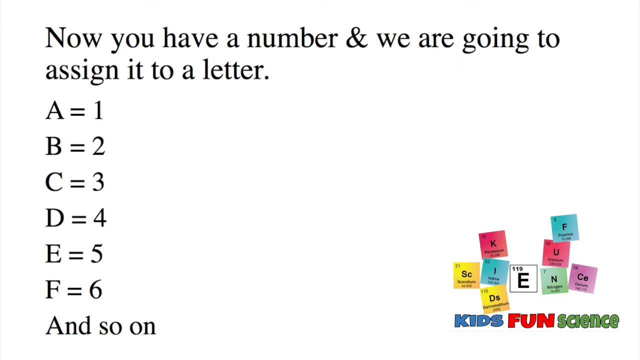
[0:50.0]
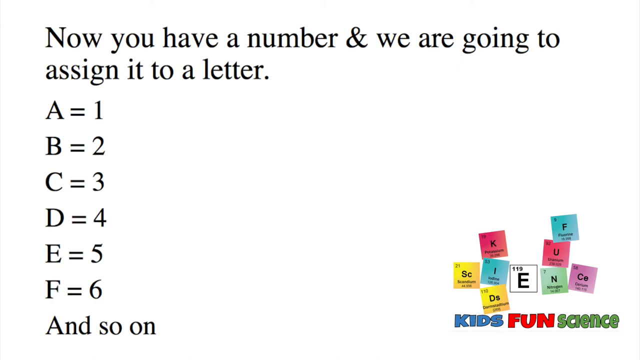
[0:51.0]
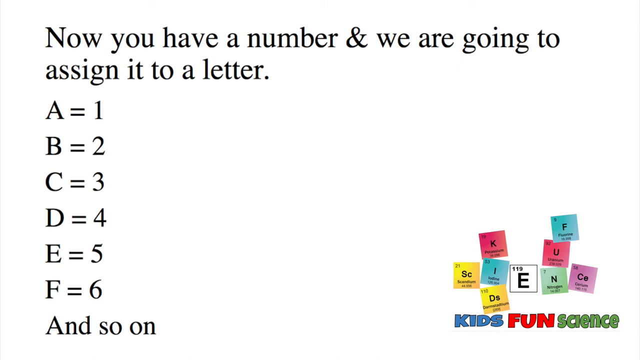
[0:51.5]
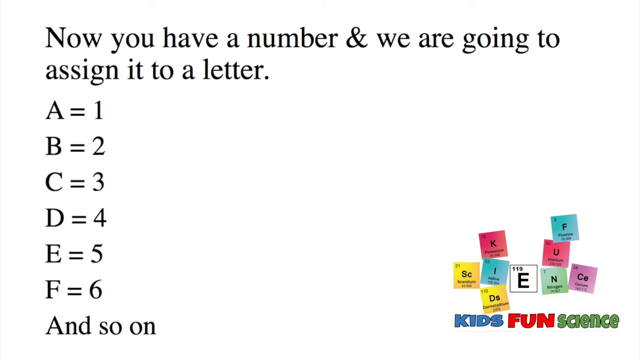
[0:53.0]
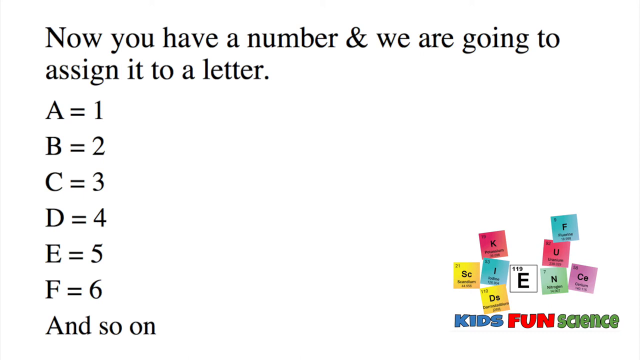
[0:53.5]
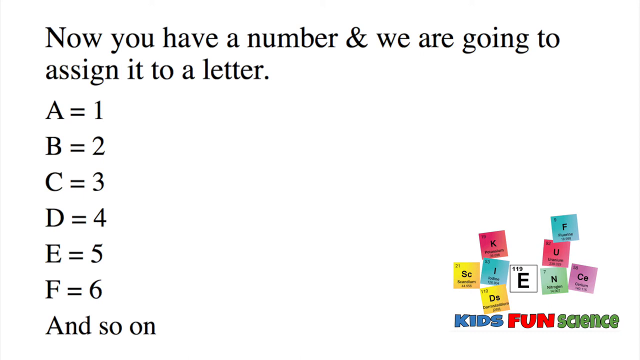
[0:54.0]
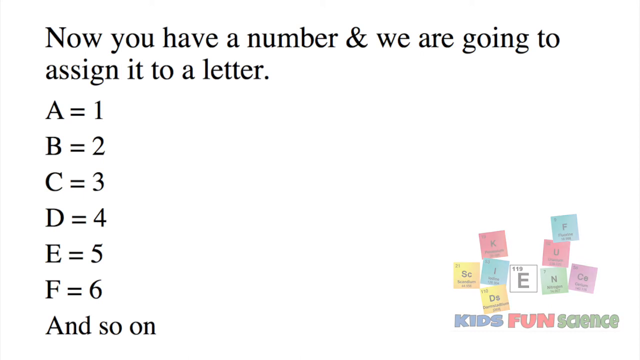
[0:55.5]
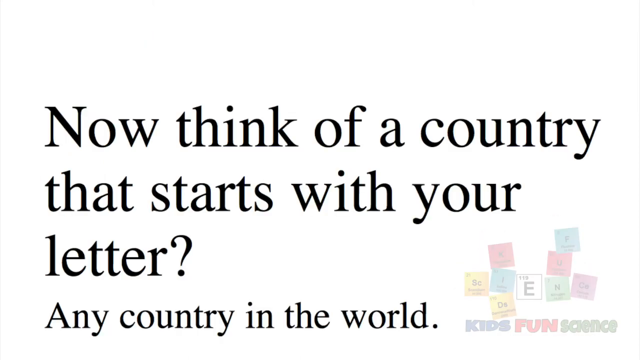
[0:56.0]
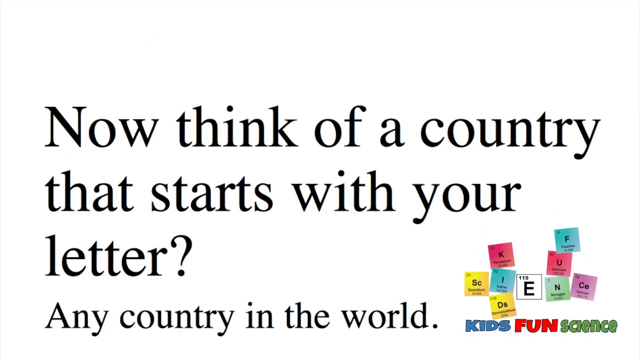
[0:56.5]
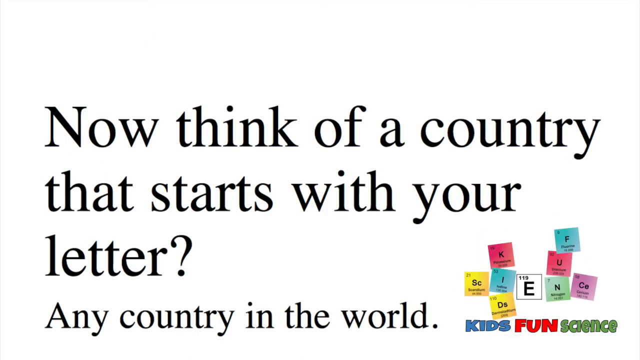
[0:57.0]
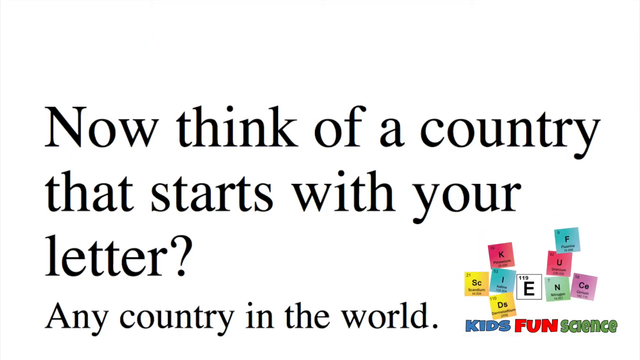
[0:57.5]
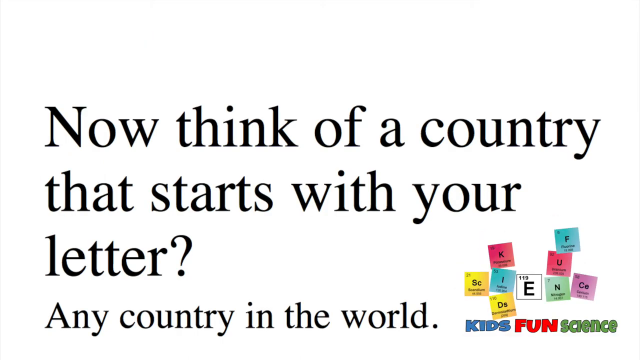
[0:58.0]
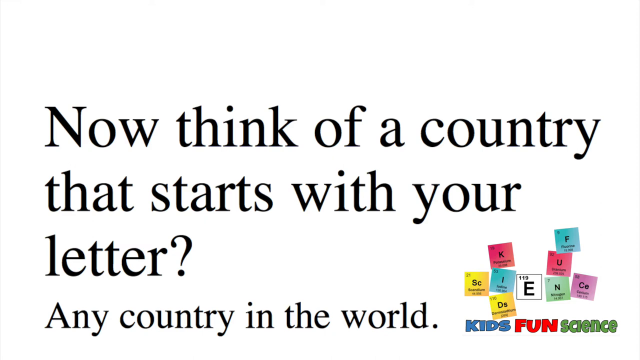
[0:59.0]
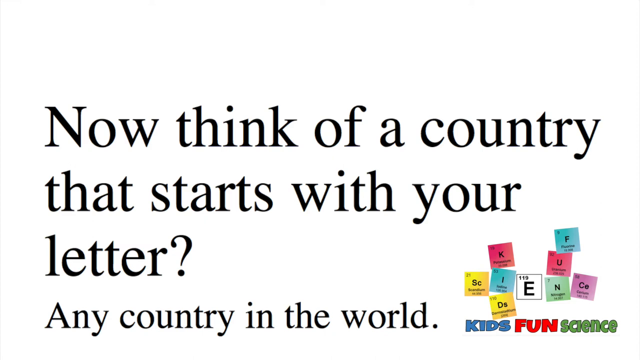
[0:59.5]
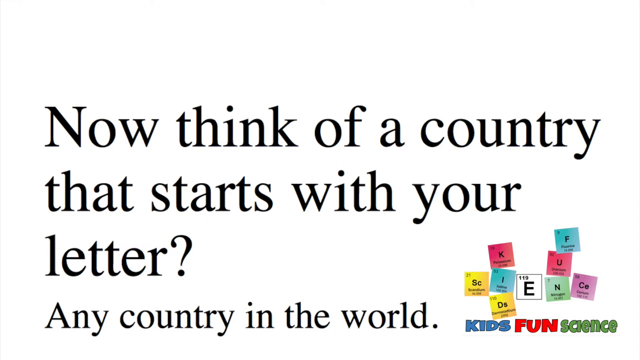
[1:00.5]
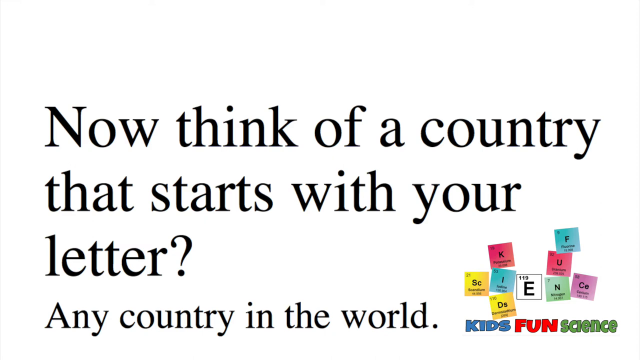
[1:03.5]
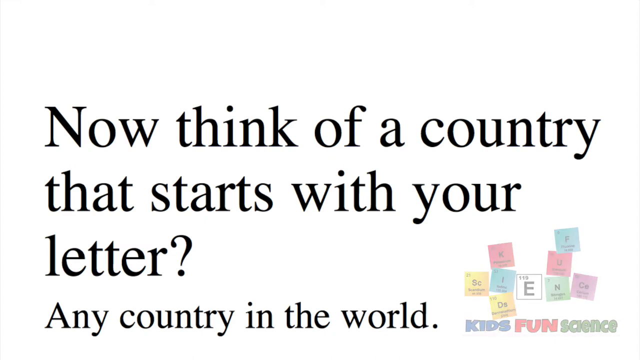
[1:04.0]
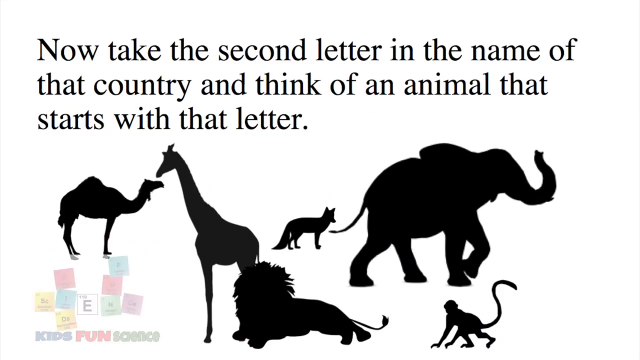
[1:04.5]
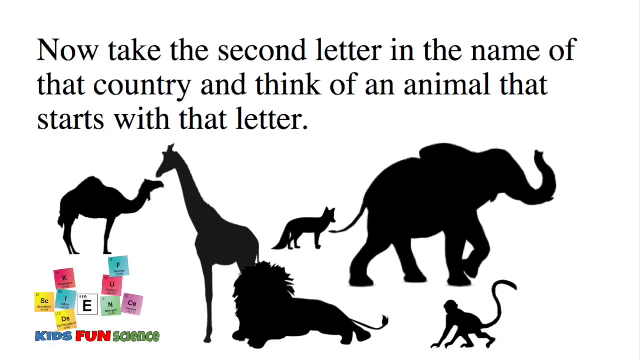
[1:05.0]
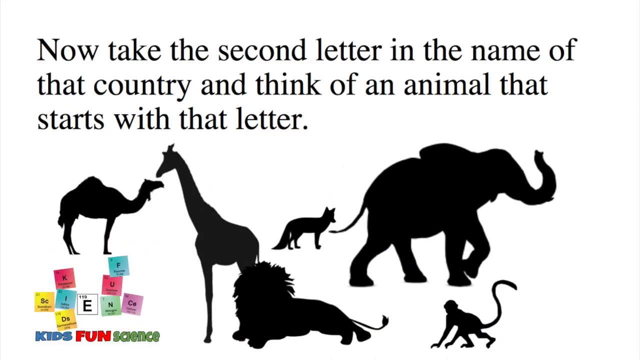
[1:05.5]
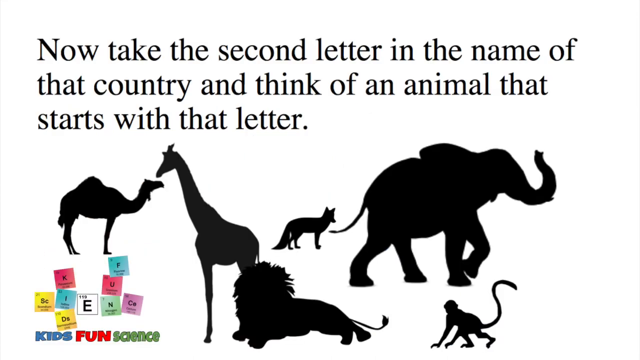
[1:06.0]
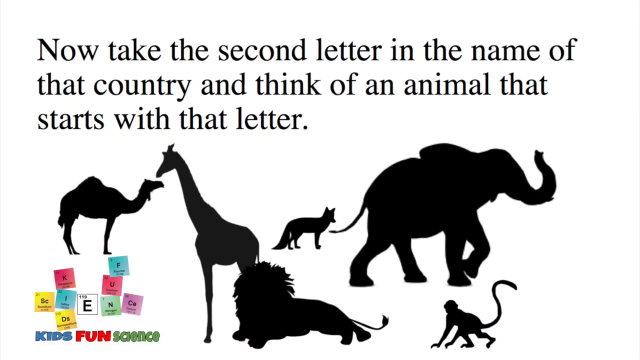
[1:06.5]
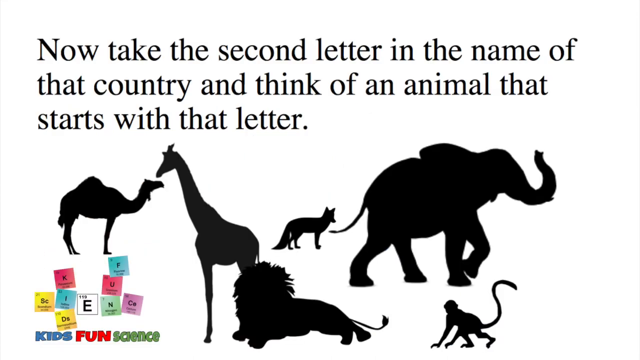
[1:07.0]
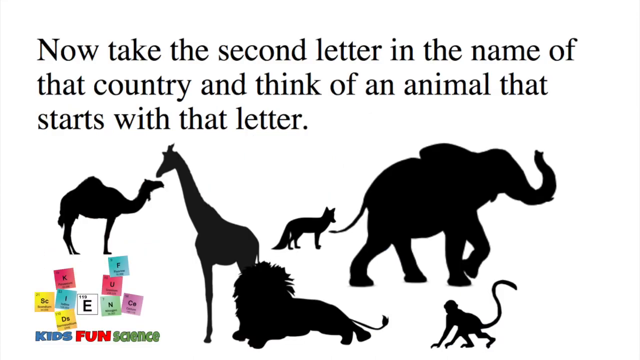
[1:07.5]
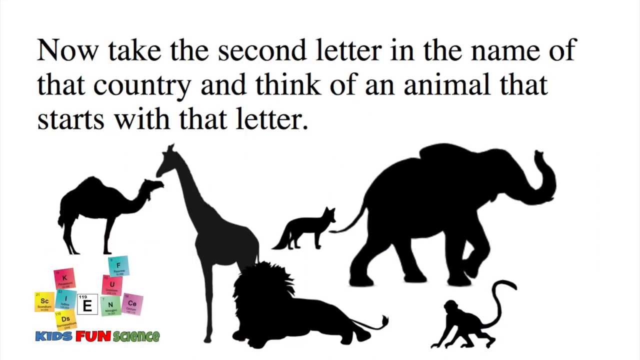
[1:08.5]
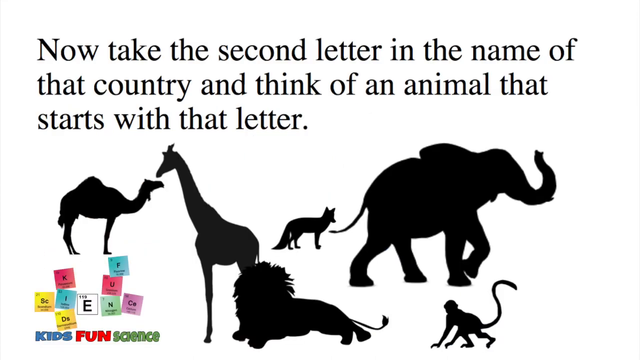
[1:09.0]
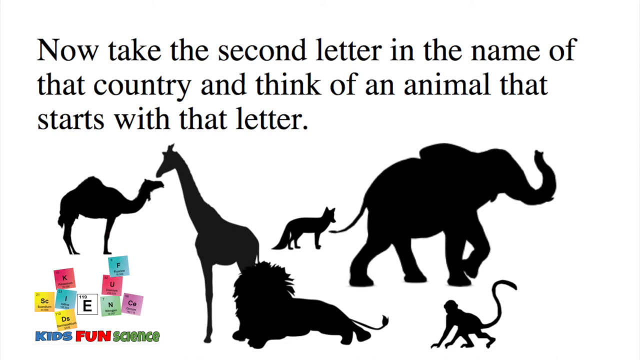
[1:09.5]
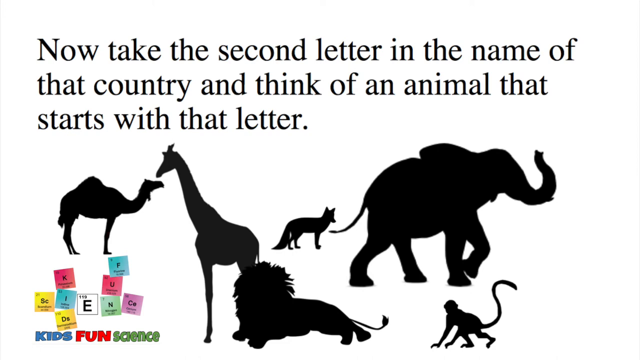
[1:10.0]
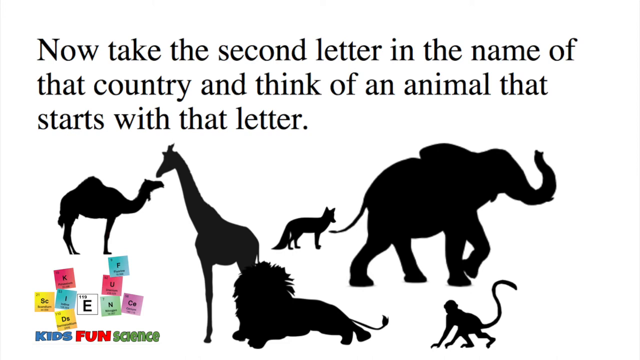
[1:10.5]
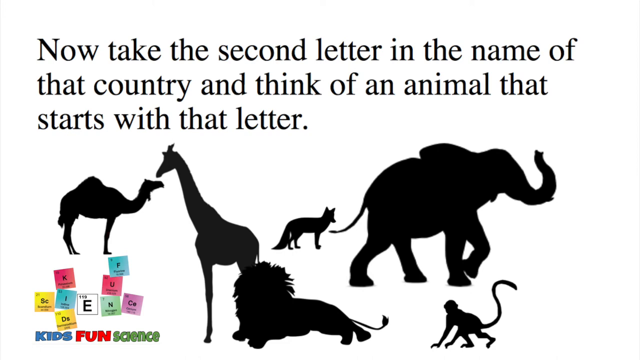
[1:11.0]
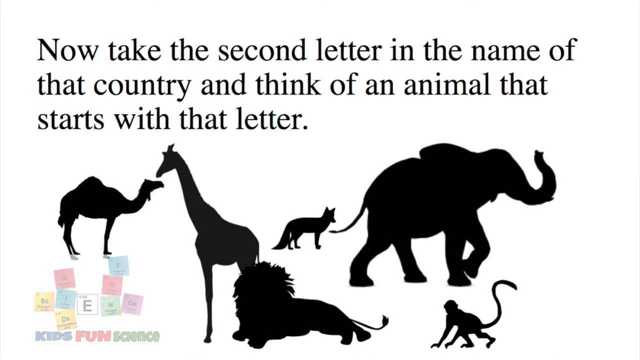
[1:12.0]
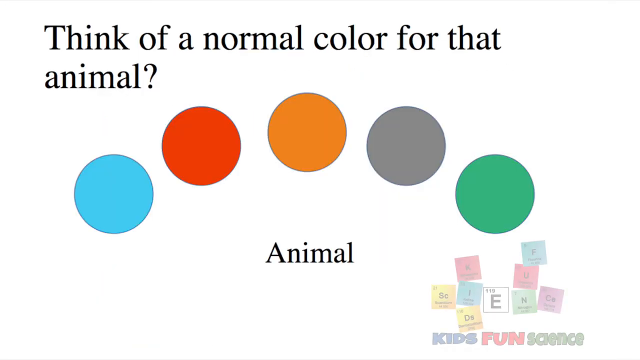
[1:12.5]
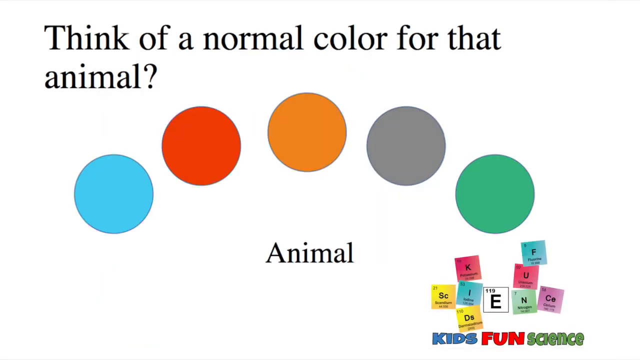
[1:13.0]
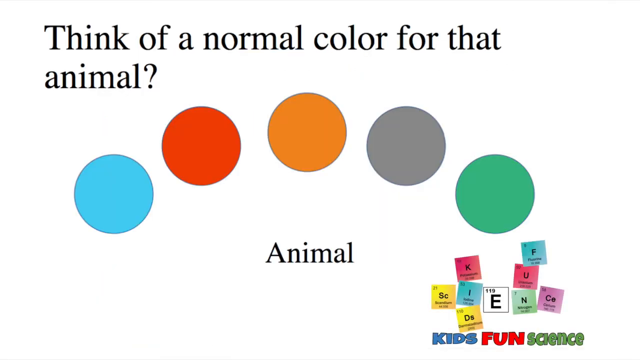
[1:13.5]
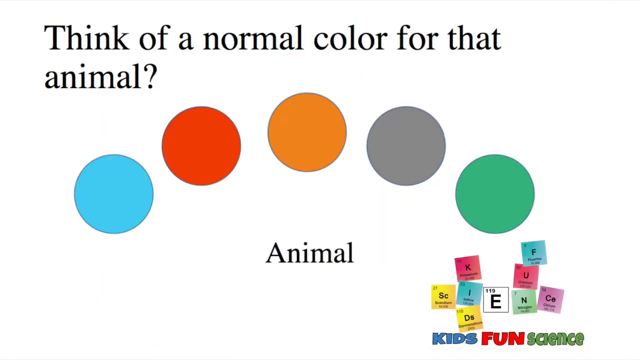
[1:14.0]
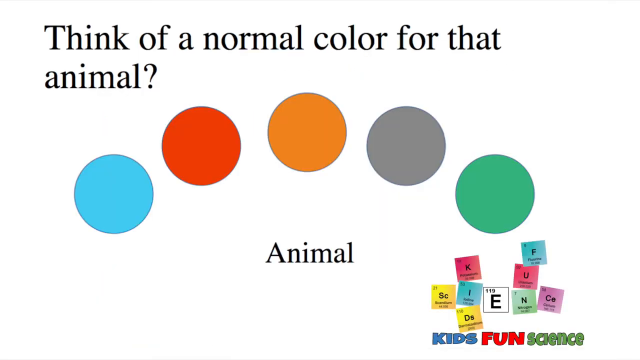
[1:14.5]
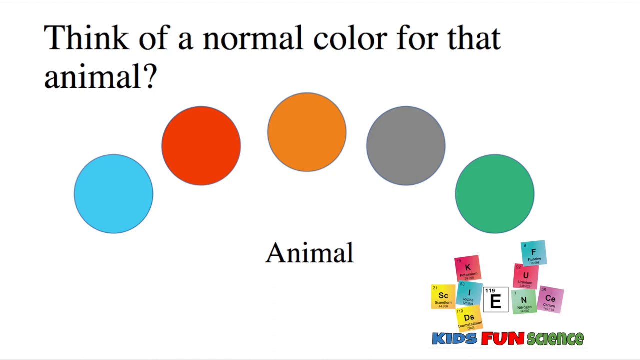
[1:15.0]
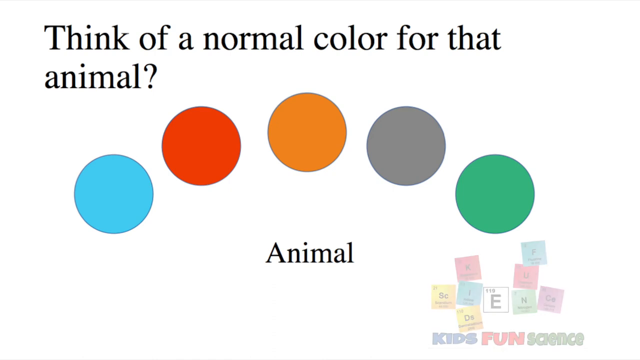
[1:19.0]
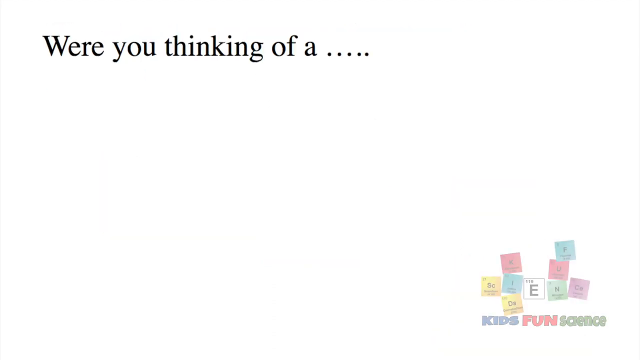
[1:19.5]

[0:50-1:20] The text continues: "Now you have a number and we are going to assign it to a letter A equals 1, B equals 2, C equals 3, D equals 4, E equals 5, F equals 6, and so on." Then it reads "Now think of a country that starts with your letter. Any country in the world. Now take the second letter in the name of that country and think of an animal that starts with that letter." Silhouettes of different animals appear: a camel, a giraffe, an elephant, a fox, a monkey, and a lion. Text reads "Think of a normal color for that animal," and colors appear: blue, red, orange, gray, and green. Then text reads "Were you thinking of a..."